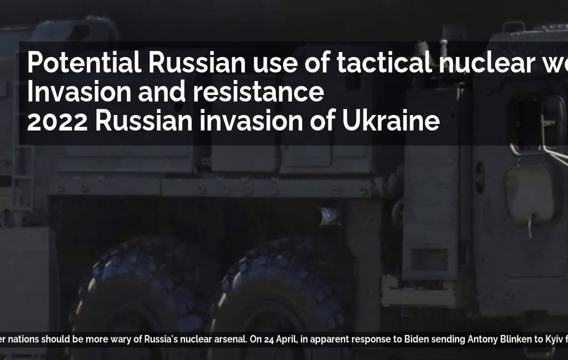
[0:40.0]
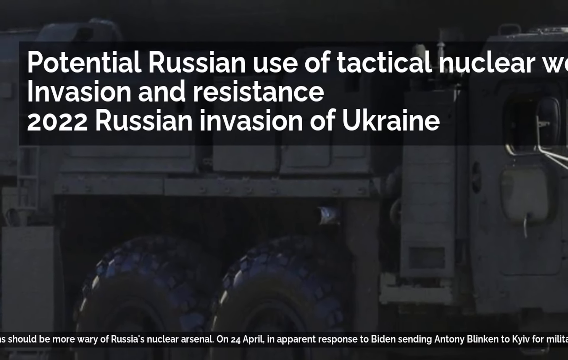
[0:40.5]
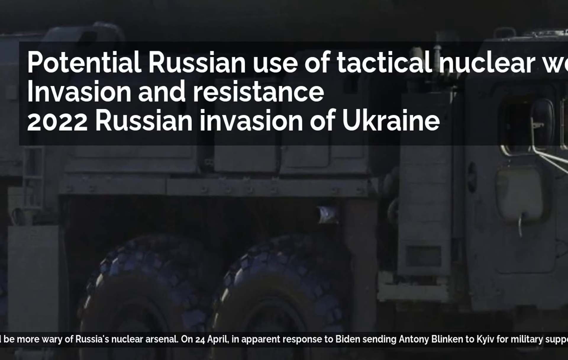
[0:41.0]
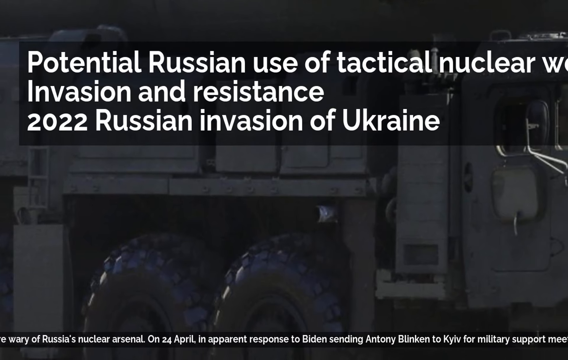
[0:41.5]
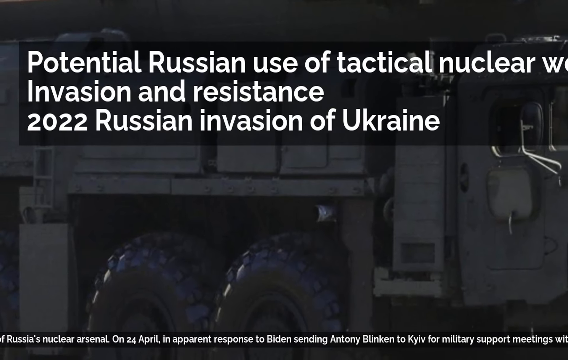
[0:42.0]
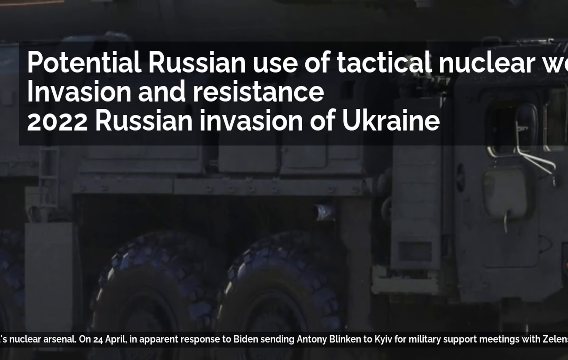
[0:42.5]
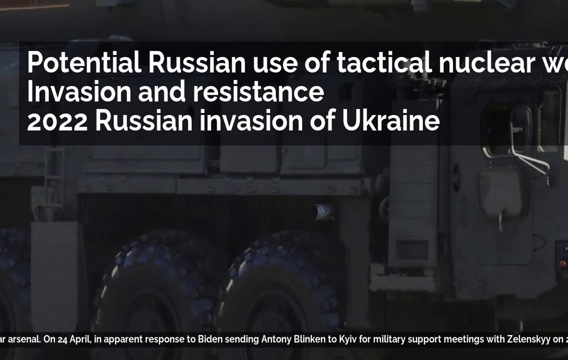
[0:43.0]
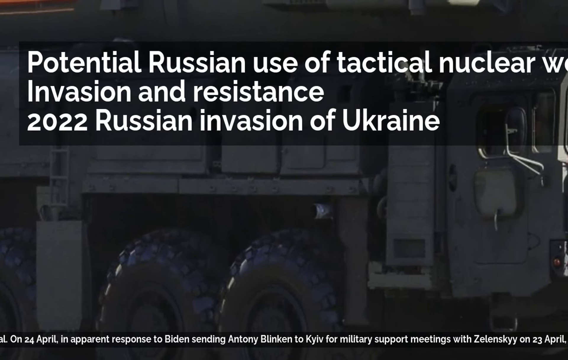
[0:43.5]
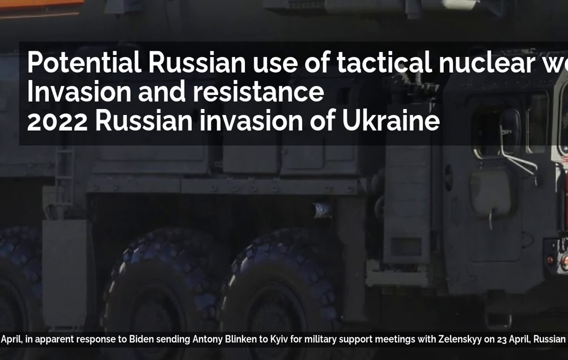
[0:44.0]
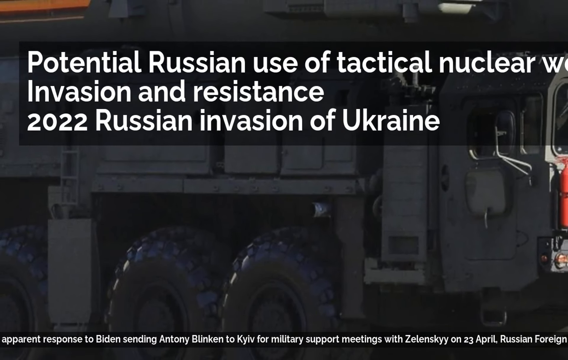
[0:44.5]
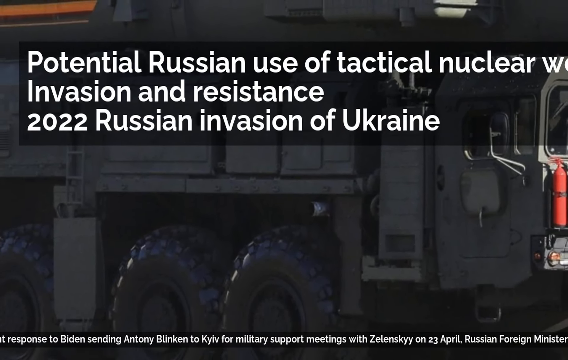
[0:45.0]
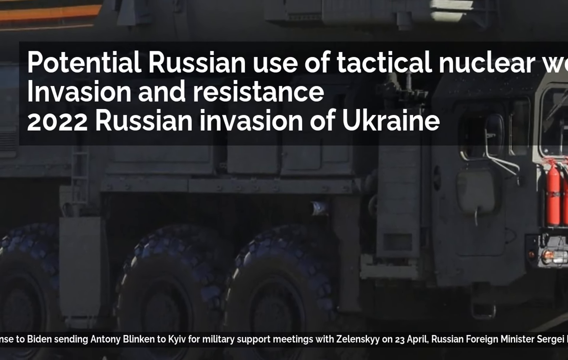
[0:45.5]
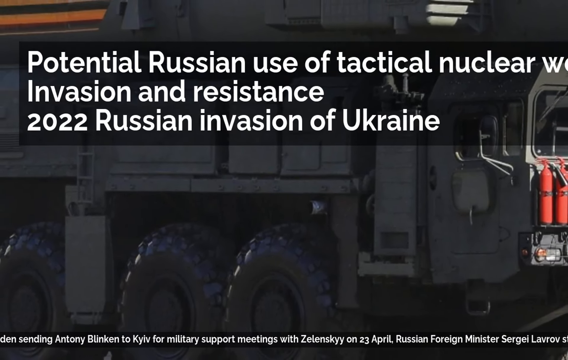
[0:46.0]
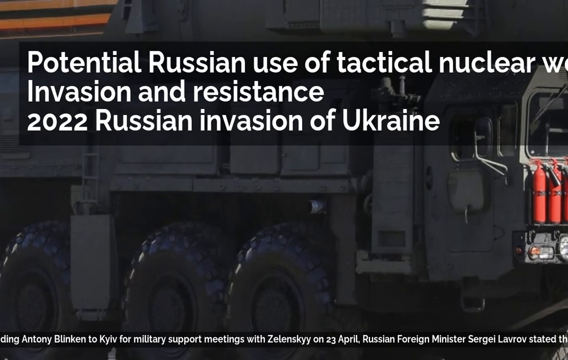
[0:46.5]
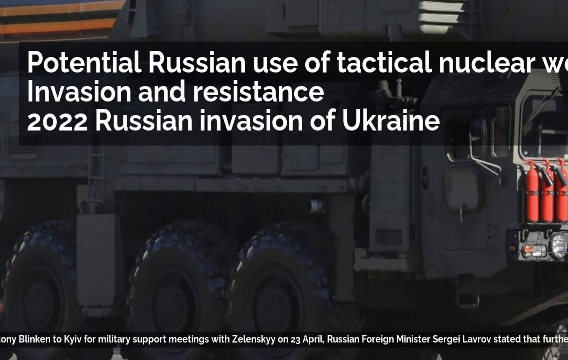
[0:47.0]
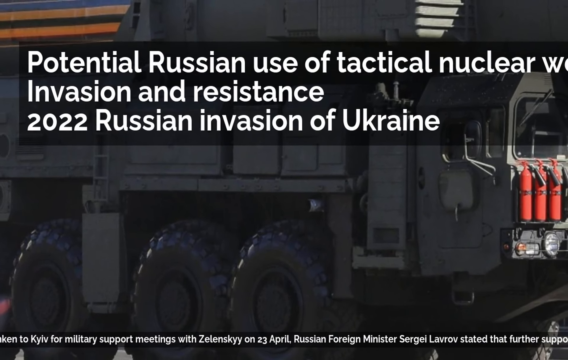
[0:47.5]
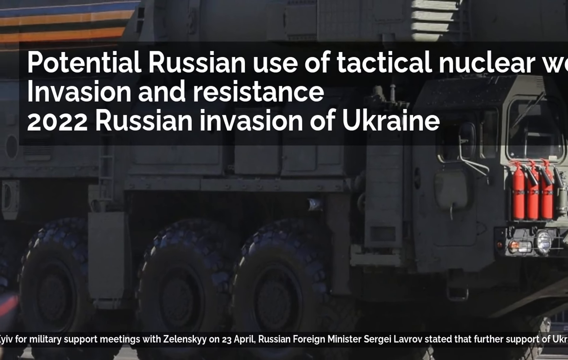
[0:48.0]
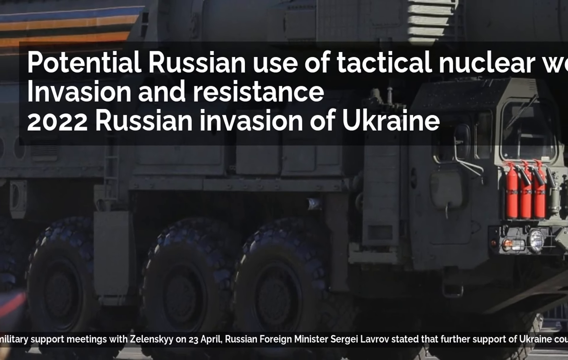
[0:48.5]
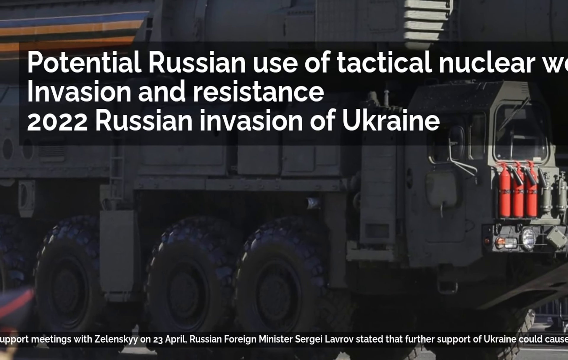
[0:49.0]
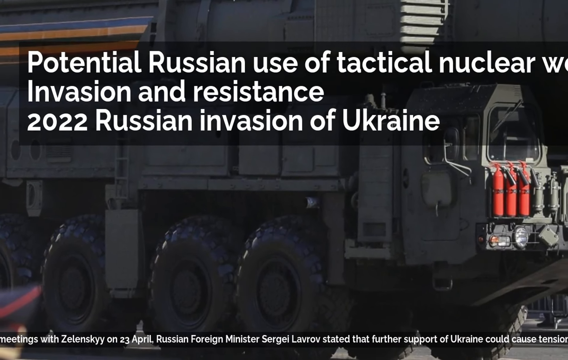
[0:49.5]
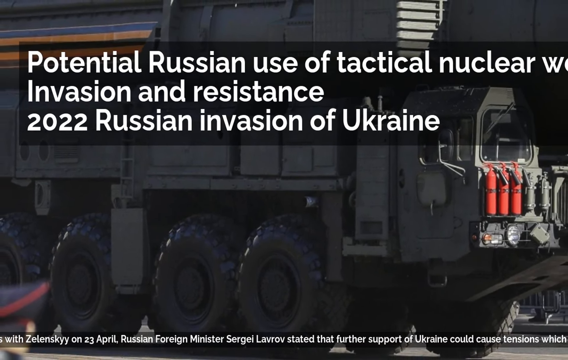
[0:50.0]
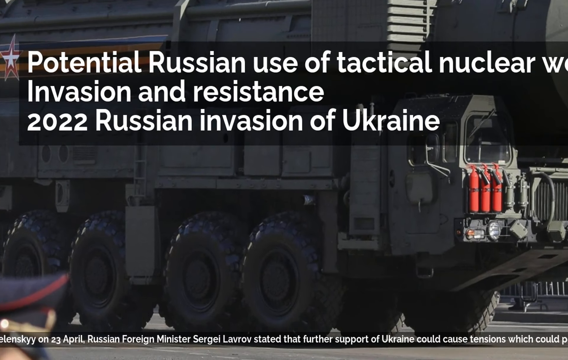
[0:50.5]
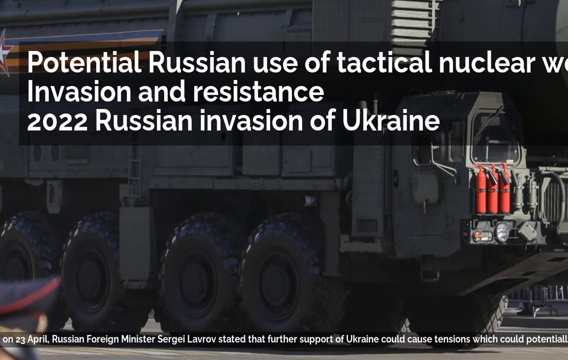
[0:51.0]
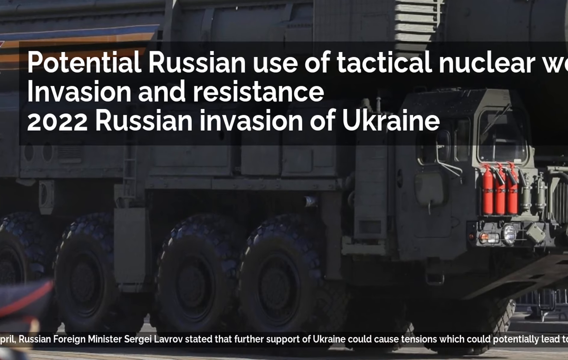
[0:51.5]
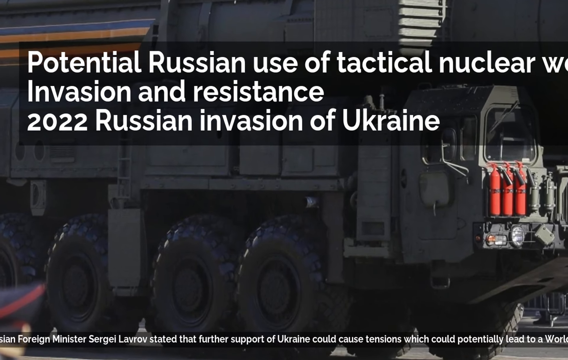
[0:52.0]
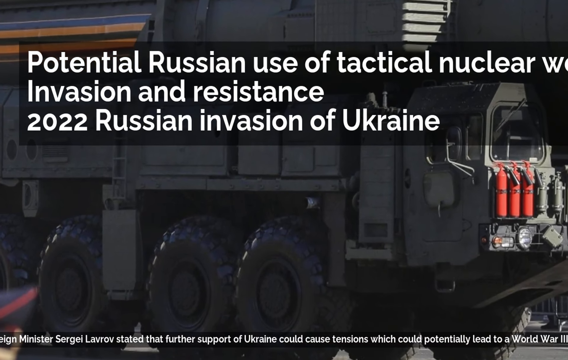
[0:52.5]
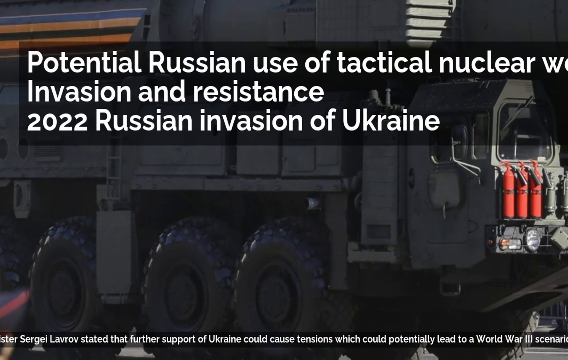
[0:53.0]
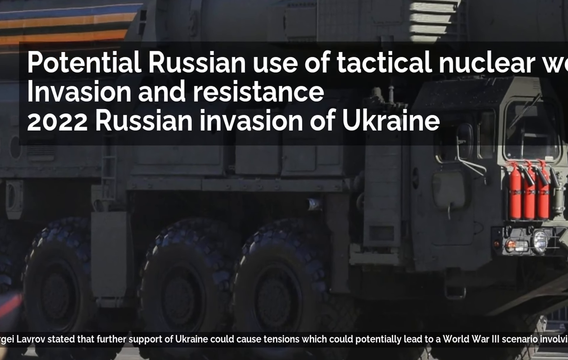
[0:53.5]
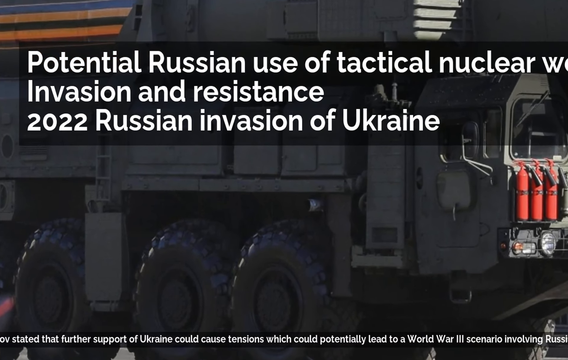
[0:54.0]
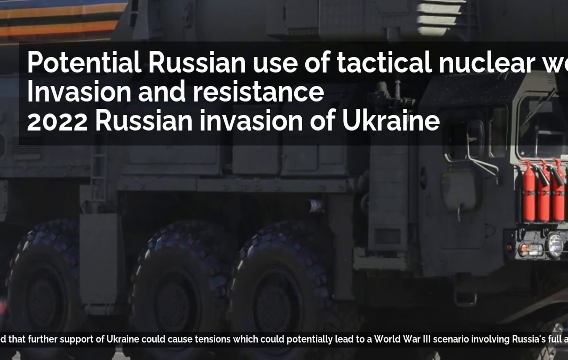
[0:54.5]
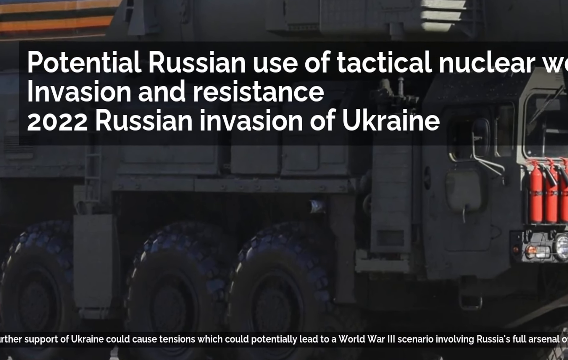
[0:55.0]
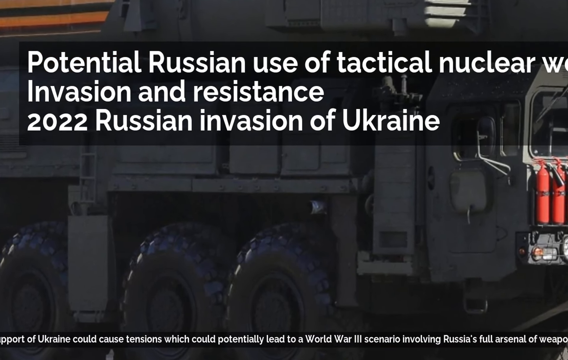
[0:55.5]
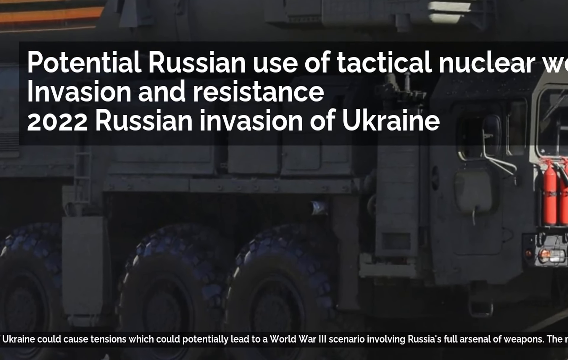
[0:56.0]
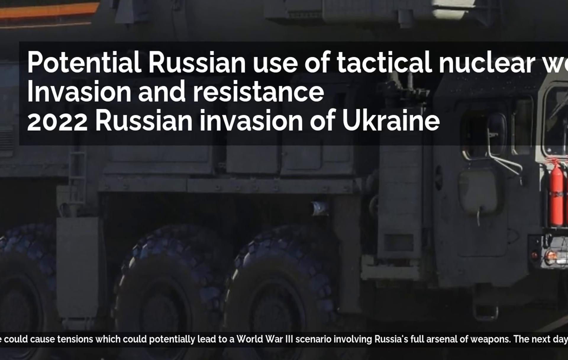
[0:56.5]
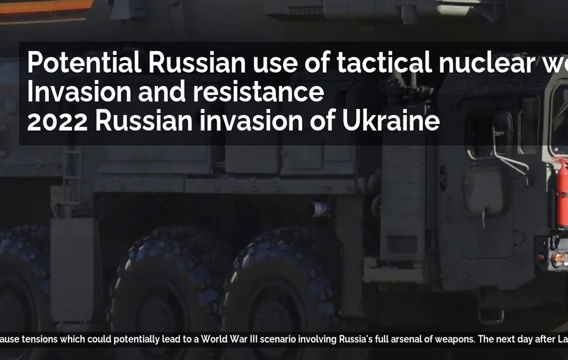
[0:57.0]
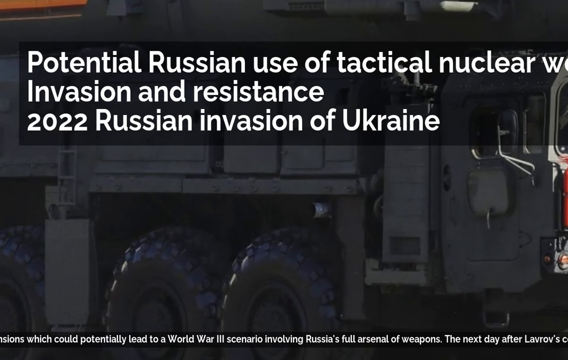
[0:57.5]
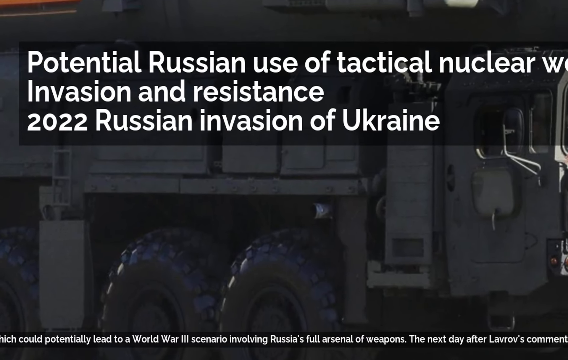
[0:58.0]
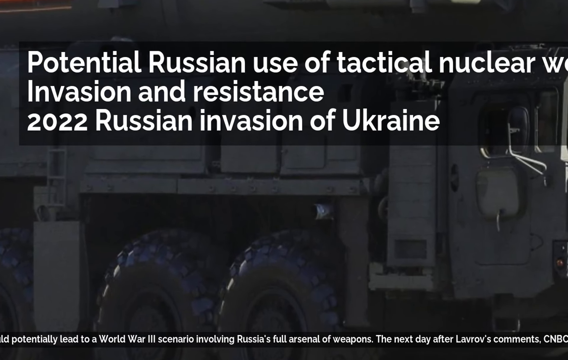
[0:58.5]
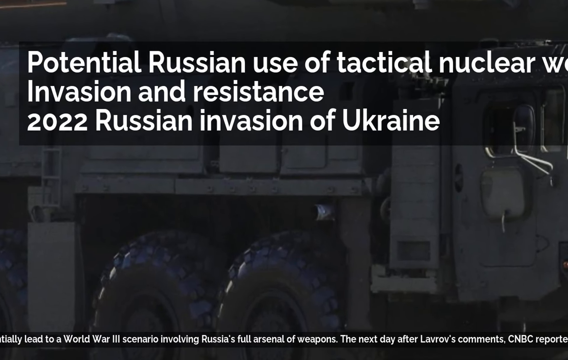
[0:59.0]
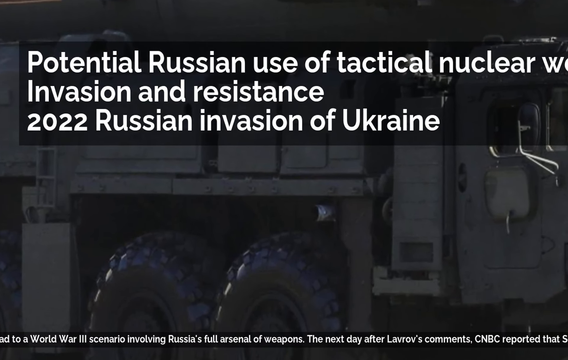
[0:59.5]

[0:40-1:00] The camera zooms out on the armored military vehicle, revealing that the truck is very, very big. It has a ladder on the side for climbing up the truck to the roof, where the missiles are kept. There is a pipe at the top, in front of or just behind the cab, above one of the wheels, which looks like it could be the exhaust pipe. Midway along the truck is a banner of yellow horizontal straps with an image of a star in the center. The ribbon text at the bottom continues: "on the 24th of April, an apparent response to Biden sending Anthony Blinken to Kiev for military support meetings with Zelensky on the 23rd of April, Russian Foreign Minister Sergei Lavrov stated that further support of Ukraine could cause tensions, which could potentially lead to a World War III scenario involving Russia's full arsenal of weapons."